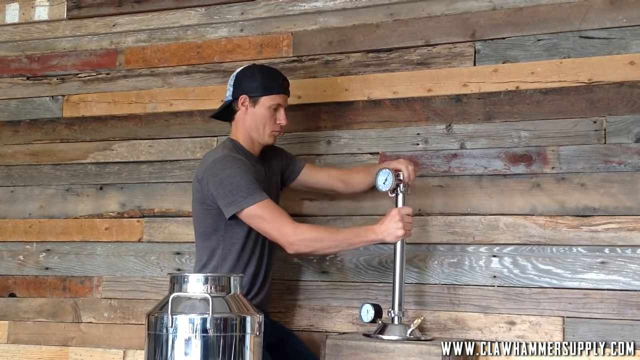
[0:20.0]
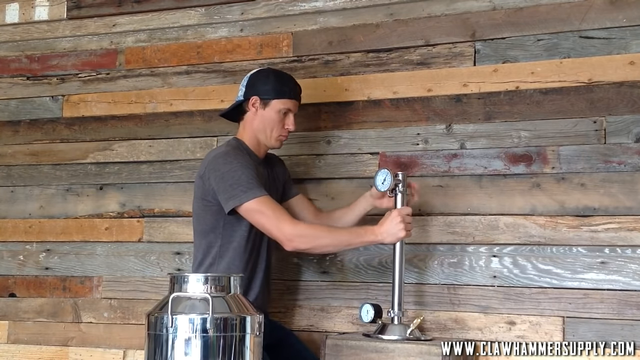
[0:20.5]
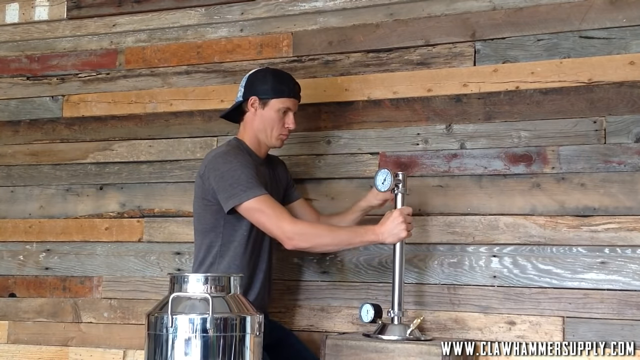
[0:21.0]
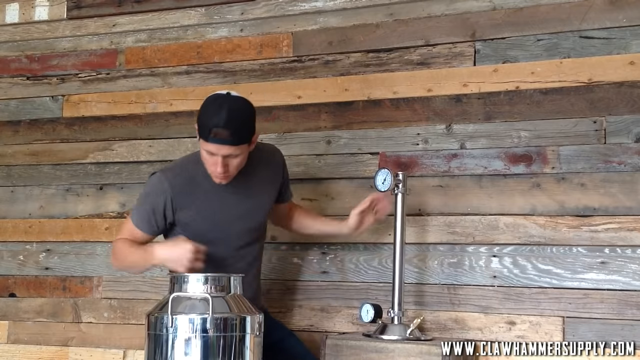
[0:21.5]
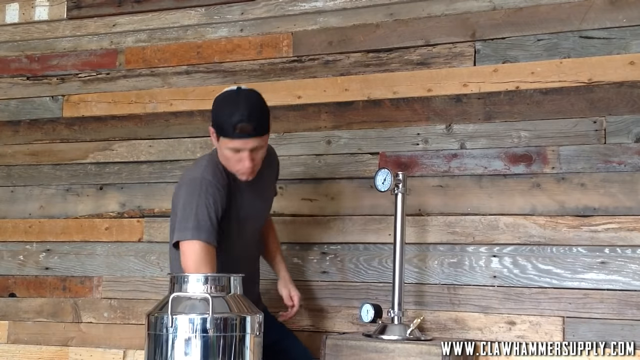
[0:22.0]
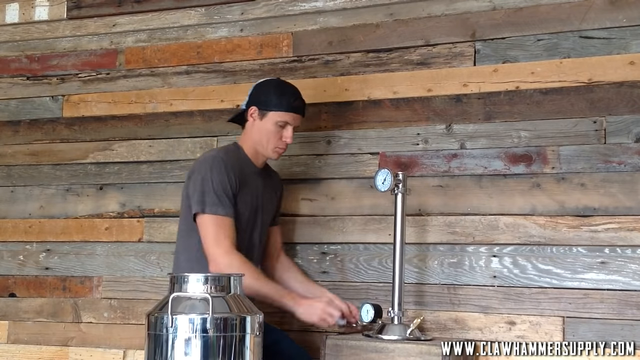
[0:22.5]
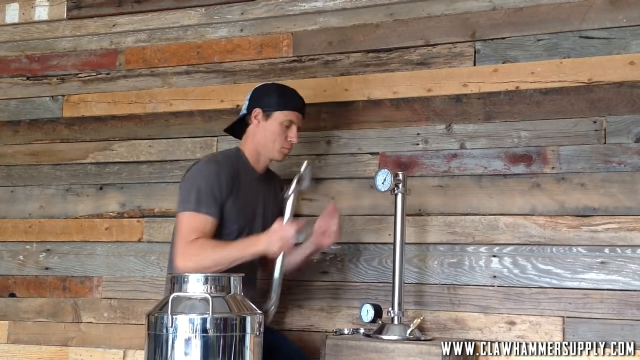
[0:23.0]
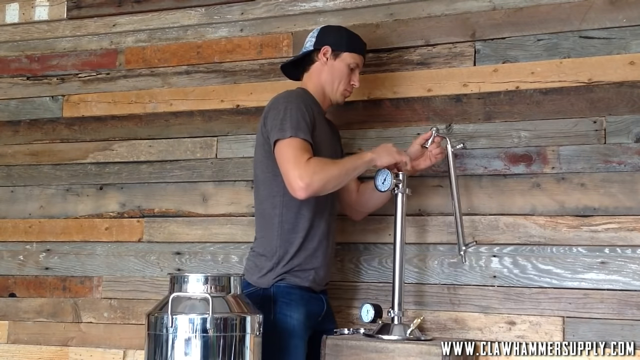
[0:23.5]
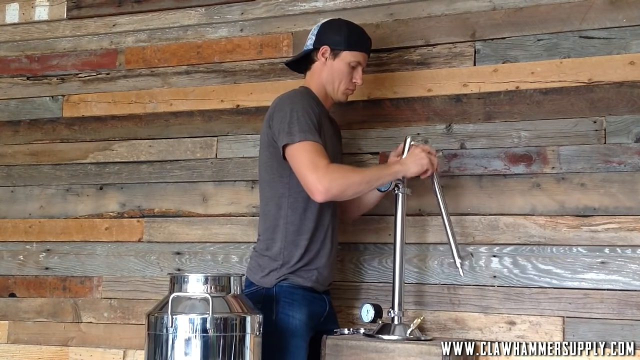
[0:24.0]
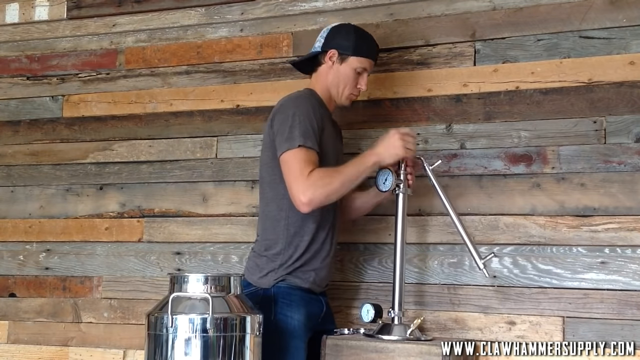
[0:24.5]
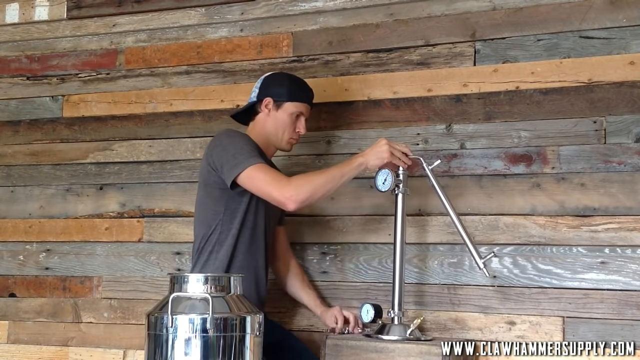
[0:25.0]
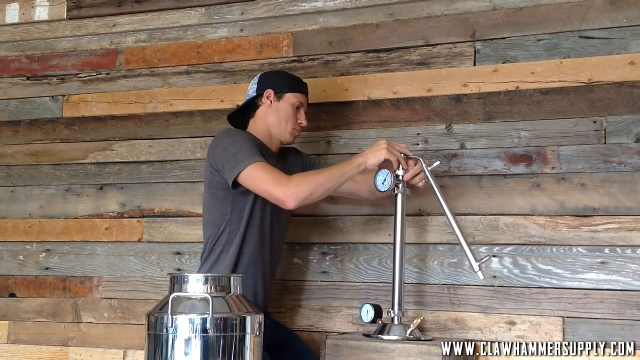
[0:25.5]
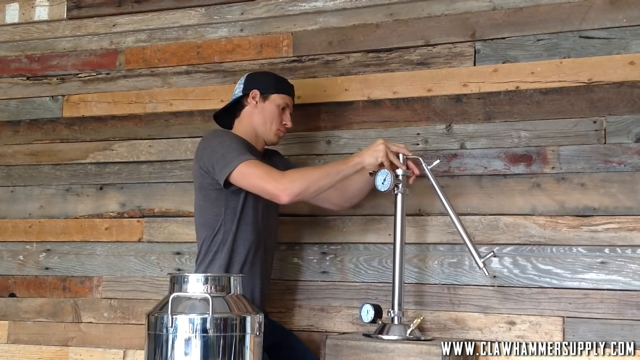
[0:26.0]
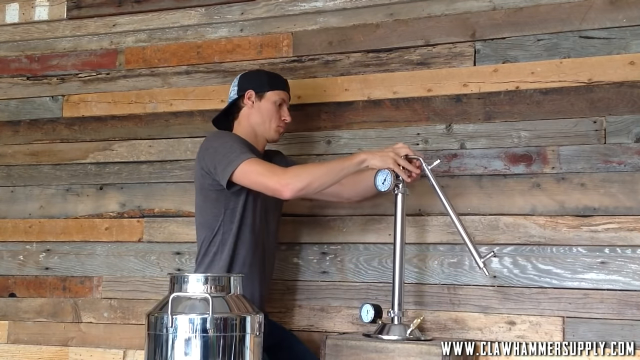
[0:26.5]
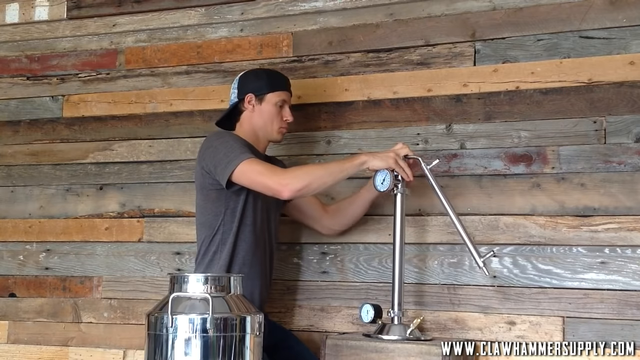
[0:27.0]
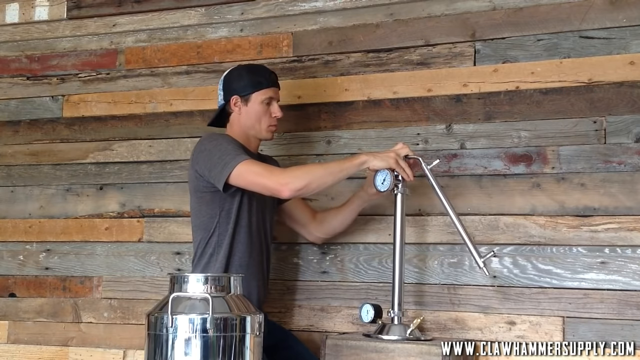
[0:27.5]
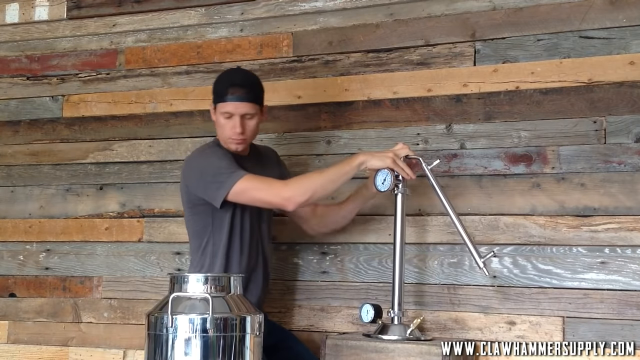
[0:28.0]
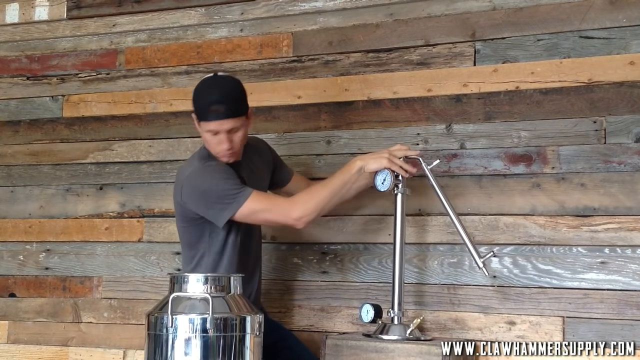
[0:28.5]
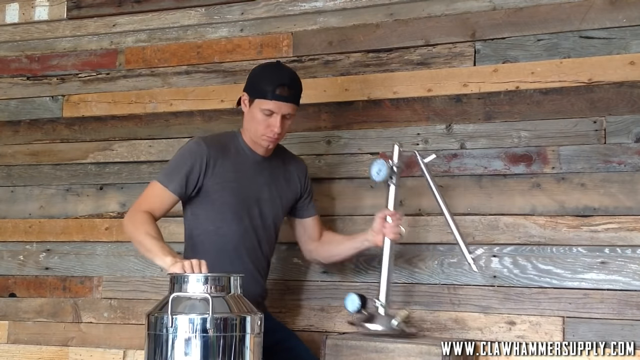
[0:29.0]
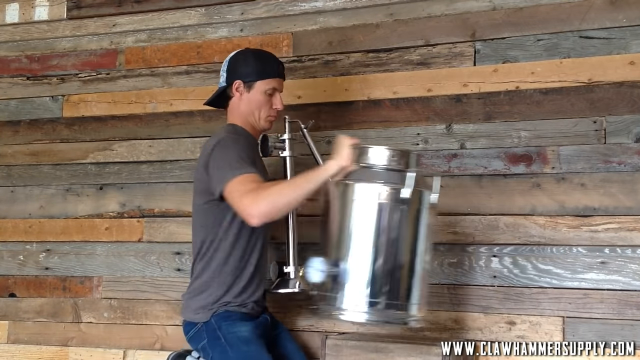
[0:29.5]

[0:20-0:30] In the same room with the wood background, the view seems to have panned out a little. The same younger white man, in his late 20s or early 30s, still wears the gray t-shirt and backwards black baseball cap; the back of the cap has a funky color design. Only the top of the still is visible. There is a handle on the back. He finishes bracketing the second pressure or temperature gauge and secures it in place, then goes back into the still and pulls out a couple more parts that are hard to make out. He puts another piece of piping on top of the piping already sticking up from the cap, just off from the temperature or pressure gauge, adds what looks like another bracketing device, and secures it. The assembly now has a little rod with a bigger rod branching off to the left, which has two other pieces shooting off from it. Everything happens very fast, with no directions.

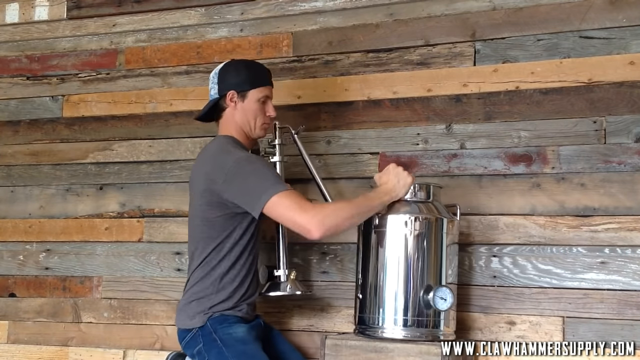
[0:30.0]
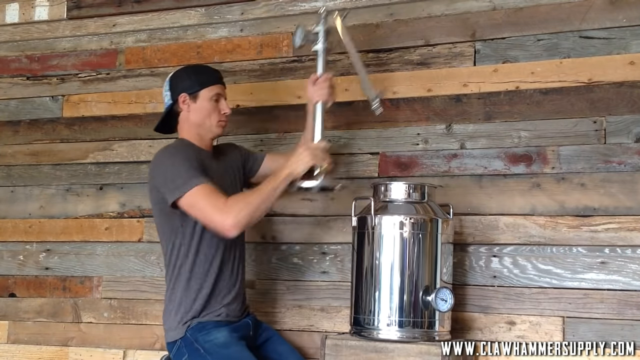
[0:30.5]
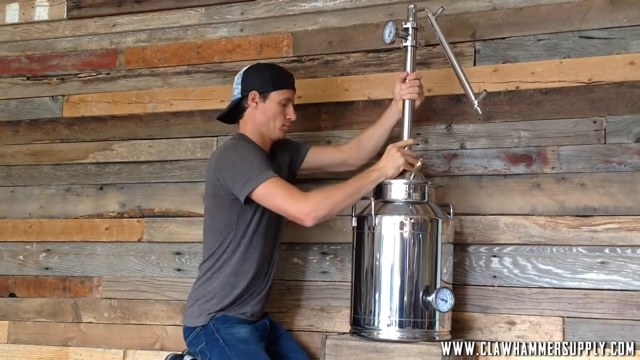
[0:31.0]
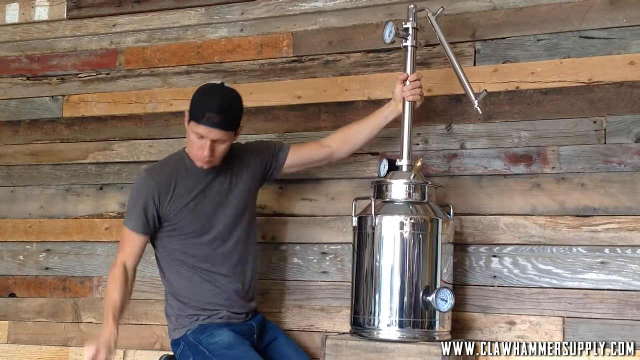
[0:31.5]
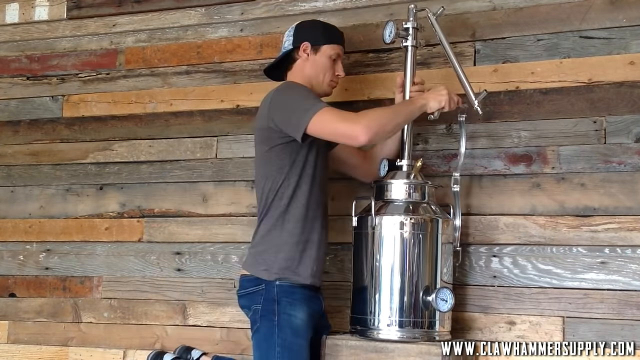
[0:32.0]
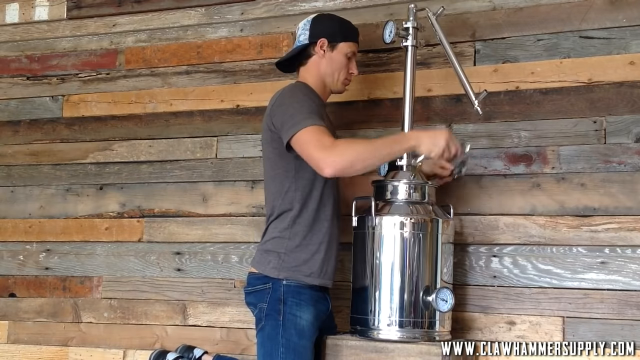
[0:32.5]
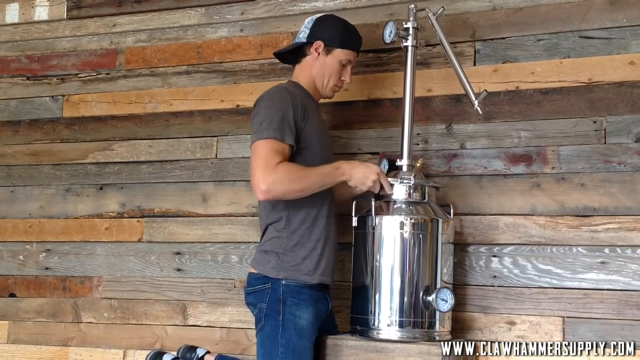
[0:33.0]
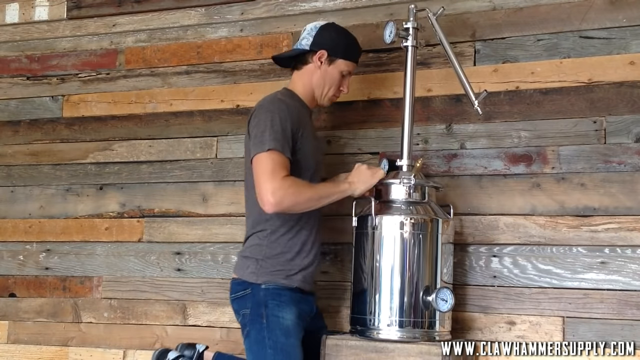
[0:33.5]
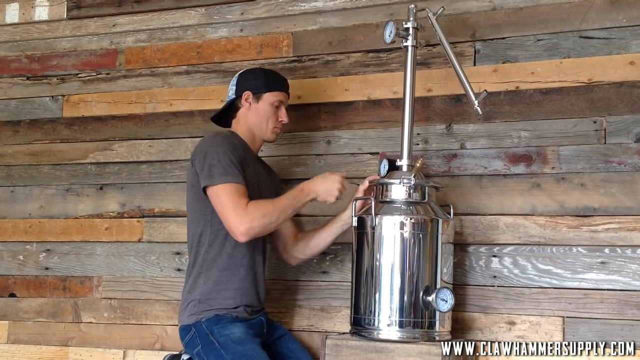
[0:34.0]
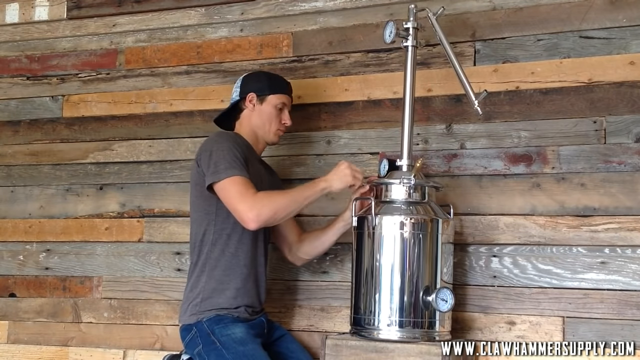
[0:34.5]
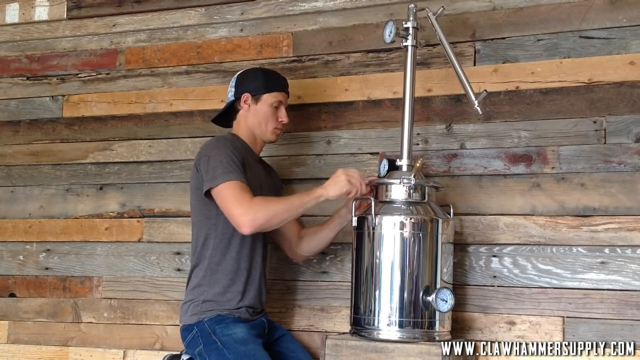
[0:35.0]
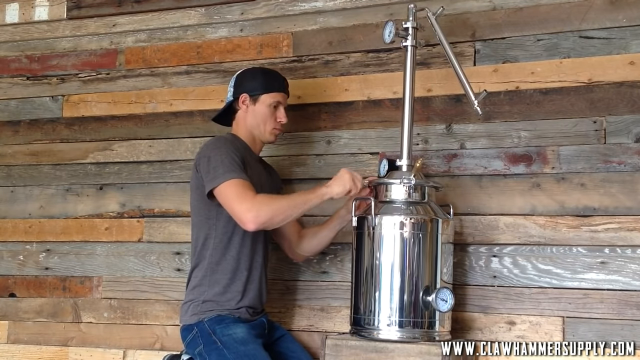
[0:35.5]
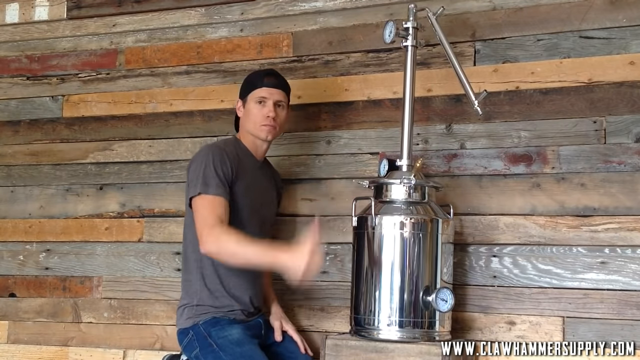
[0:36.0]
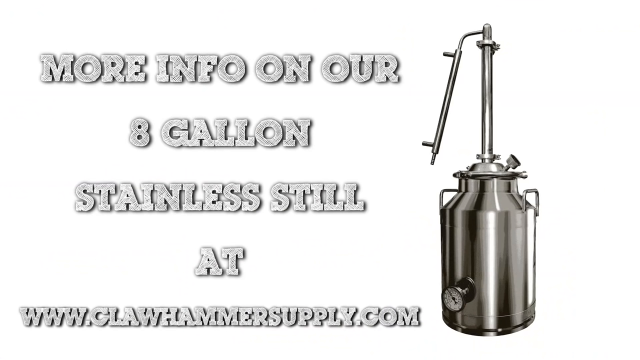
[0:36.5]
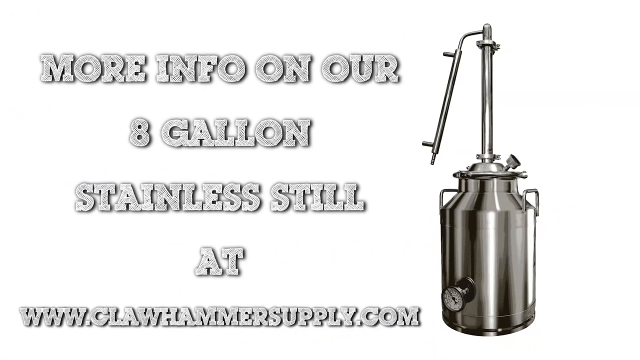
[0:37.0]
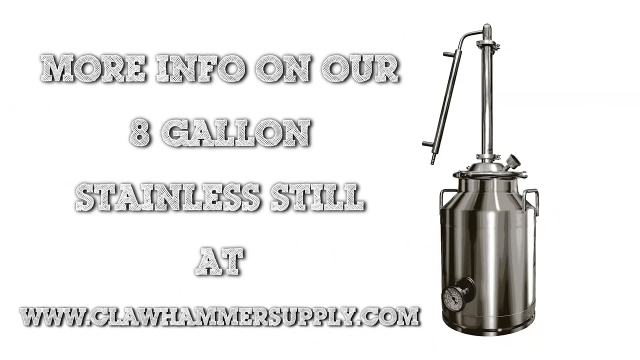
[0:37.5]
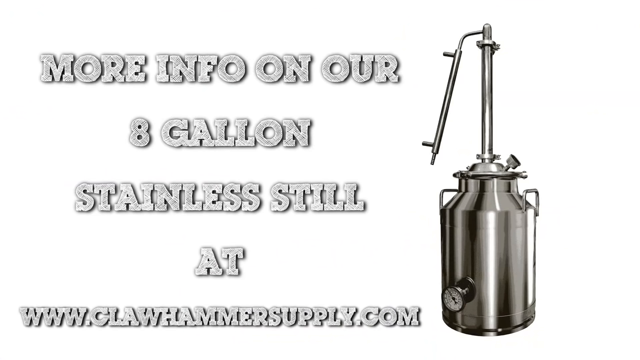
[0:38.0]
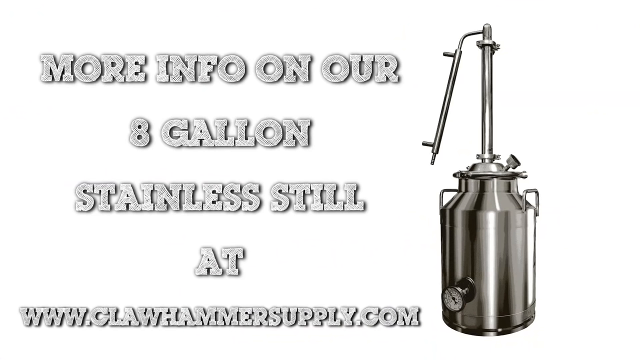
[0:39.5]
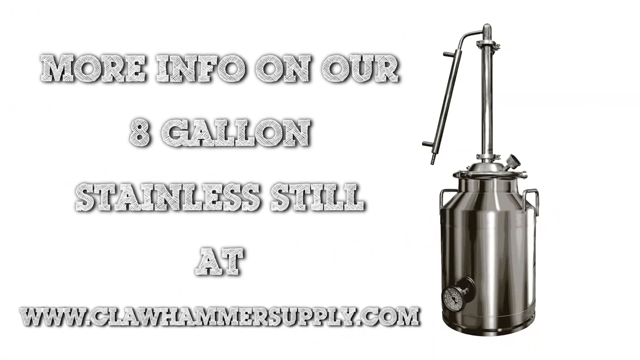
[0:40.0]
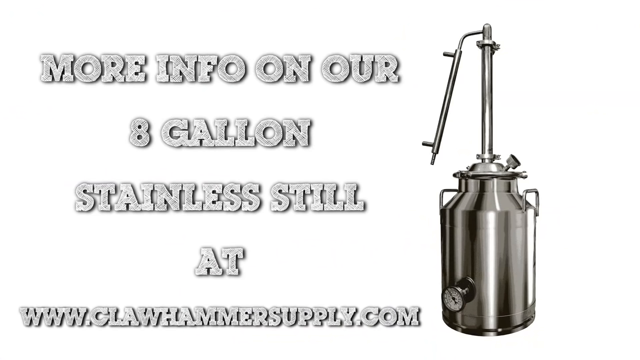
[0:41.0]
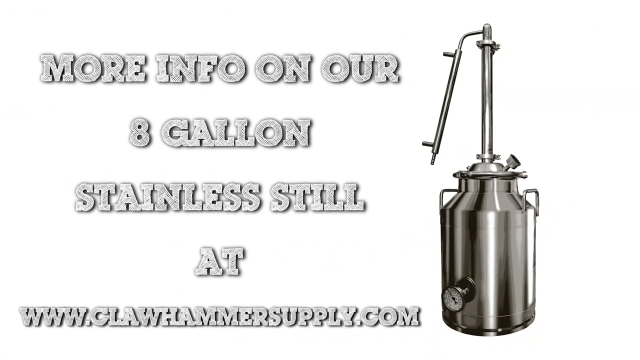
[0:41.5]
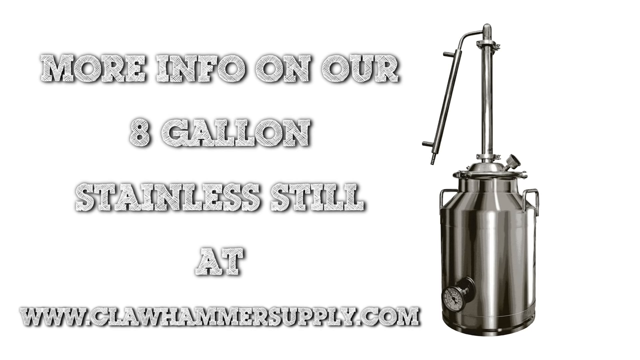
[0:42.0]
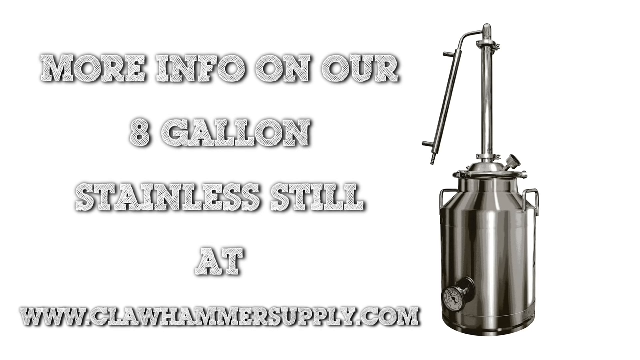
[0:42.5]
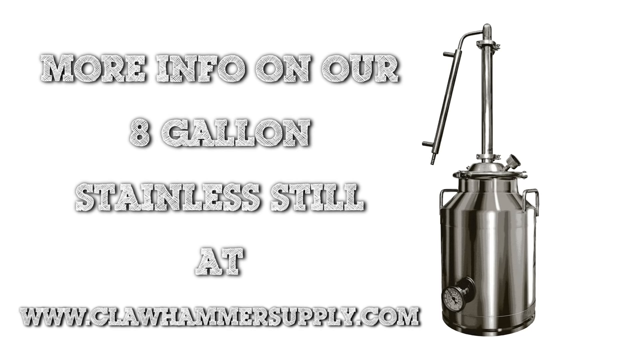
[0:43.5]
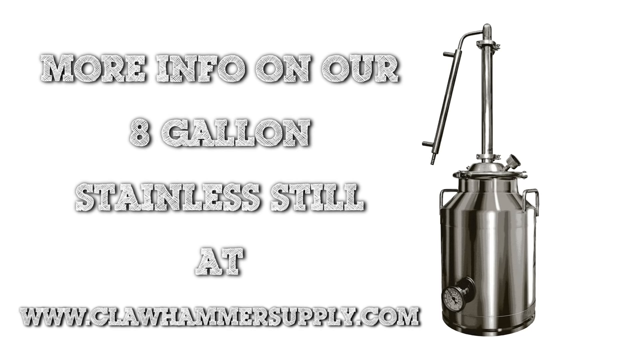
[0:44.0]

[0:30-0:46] In the same room, the view seems to have closed in, since he has moved the still, so more of its bottom is visible, including a temperature gauge; the still is on the right of the screen and the man is on the left. He is the same white man in his late 20s or early 30s in the gray t-shirt and backwards black baseball cap; more of the cap's front design is visible, which looks like it might be tie-dye. He moves the front of the still elsewhere so the top can be put on, and has to hold the top in place. The top has the two pressure gauges, the various brackets, and another pipe coming down from it. He puts on a bigger, circular bracket around where the cap meets the bottom of the still and screws something in, then gestures as if saying it is all done. The video cuts to an ending screen with a white background that slowly goes into gray and dark gray. Text on the right, in a light pencil-shading style different from the opening, gives more info on the eight-gallon still and the company's website, something ending in "hammersupply.com", partly obscured by other wording. On the left is a completely finished still.